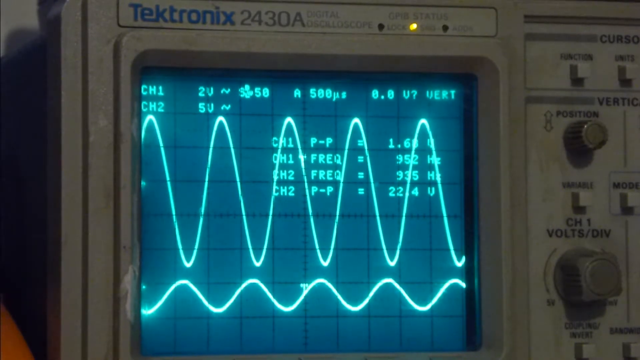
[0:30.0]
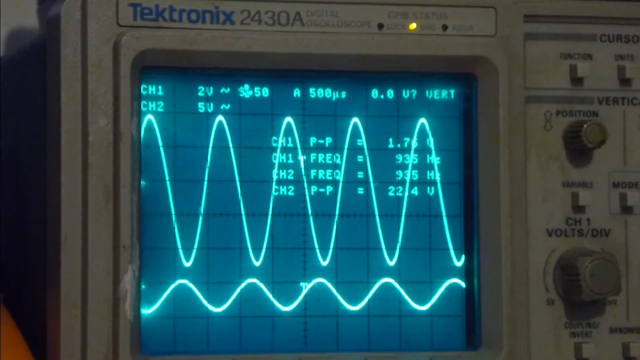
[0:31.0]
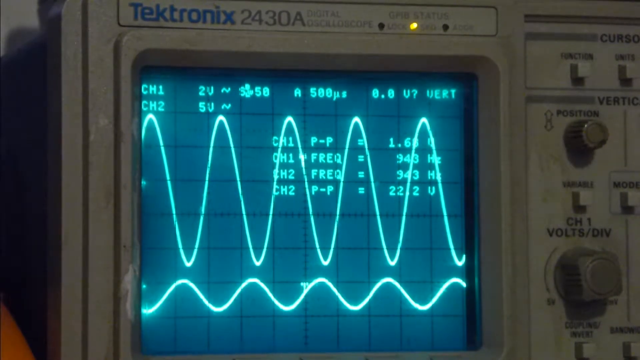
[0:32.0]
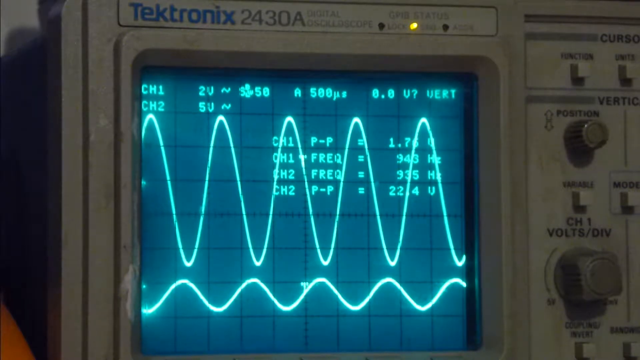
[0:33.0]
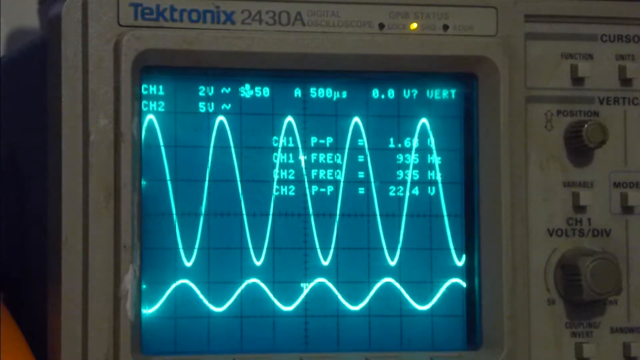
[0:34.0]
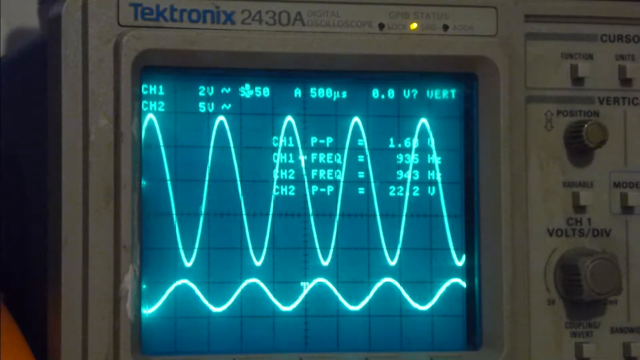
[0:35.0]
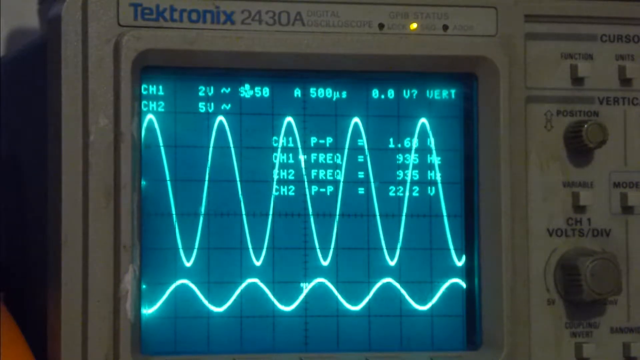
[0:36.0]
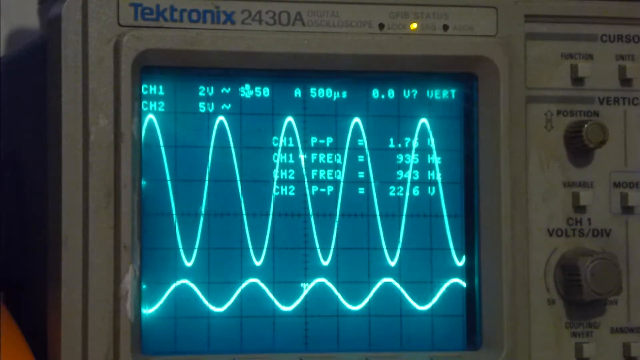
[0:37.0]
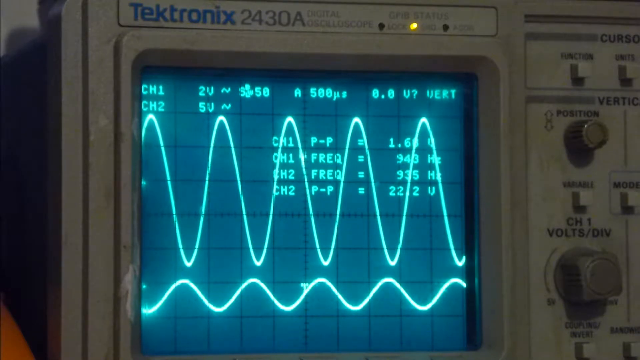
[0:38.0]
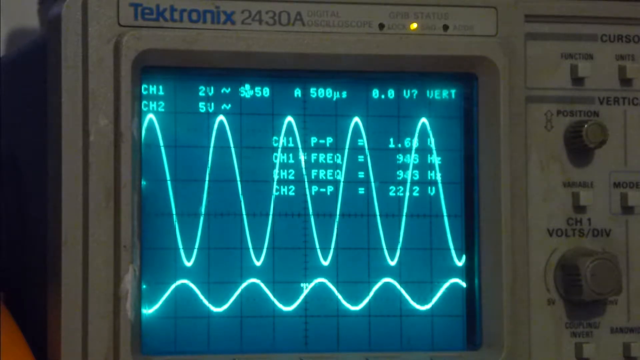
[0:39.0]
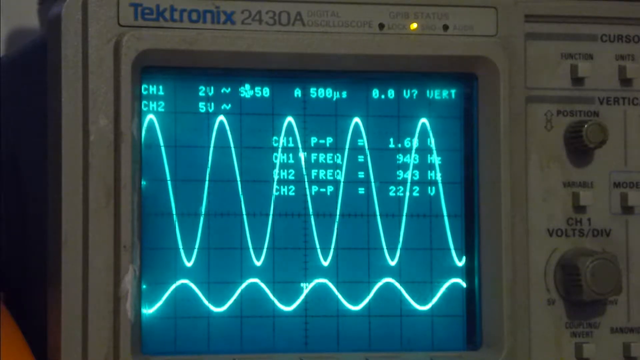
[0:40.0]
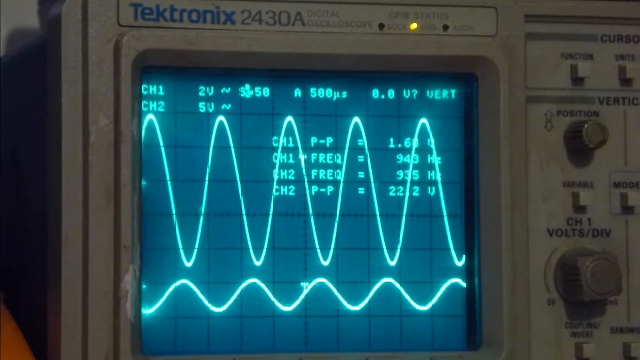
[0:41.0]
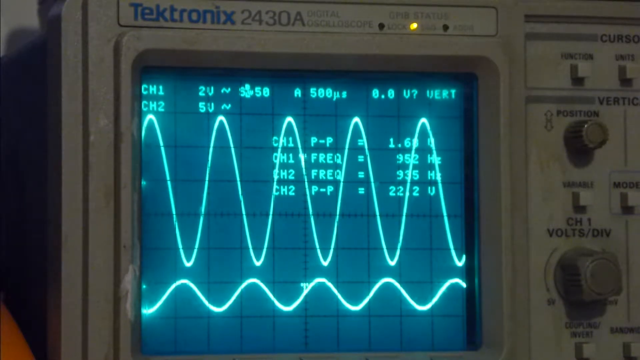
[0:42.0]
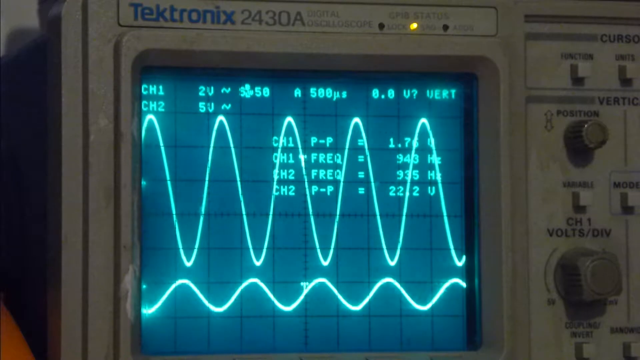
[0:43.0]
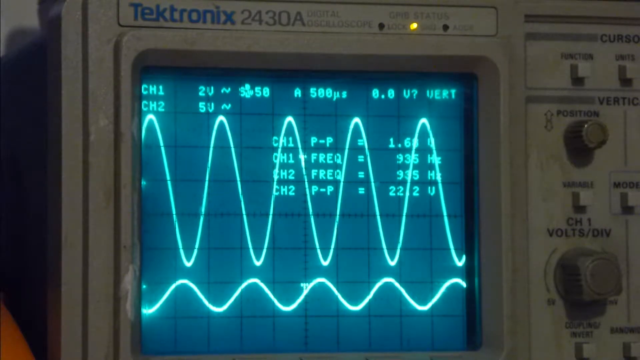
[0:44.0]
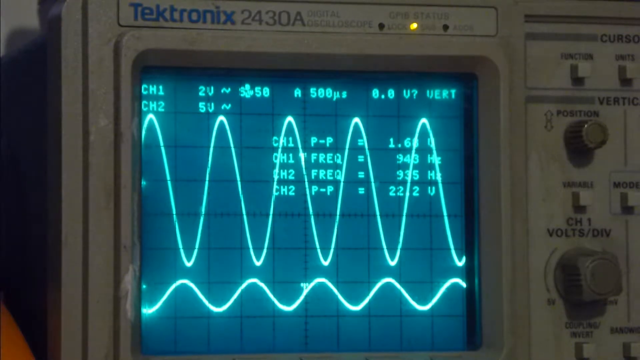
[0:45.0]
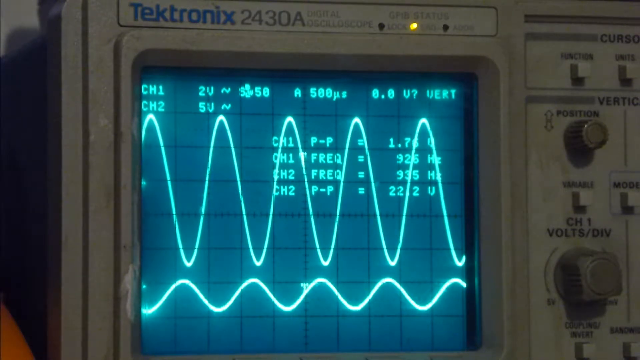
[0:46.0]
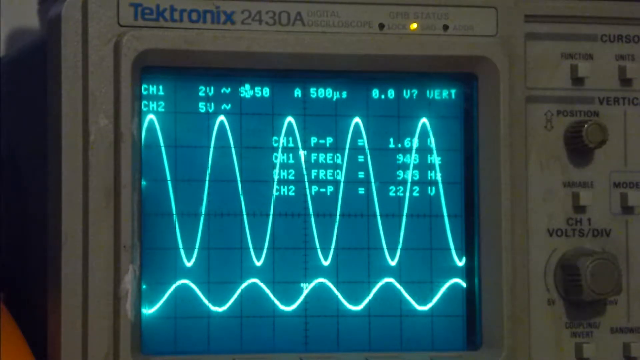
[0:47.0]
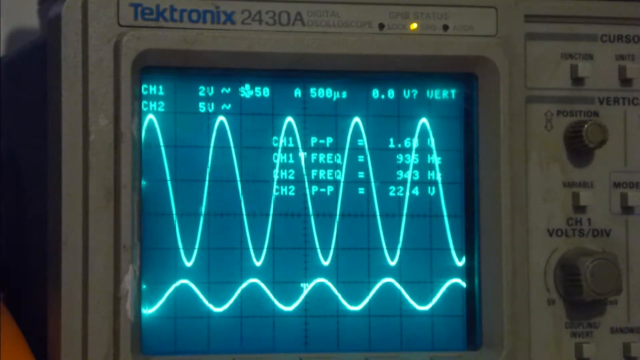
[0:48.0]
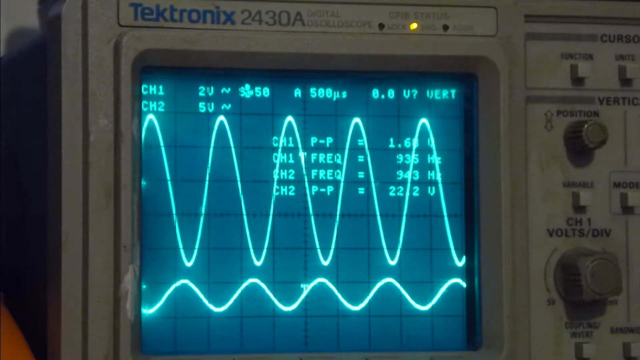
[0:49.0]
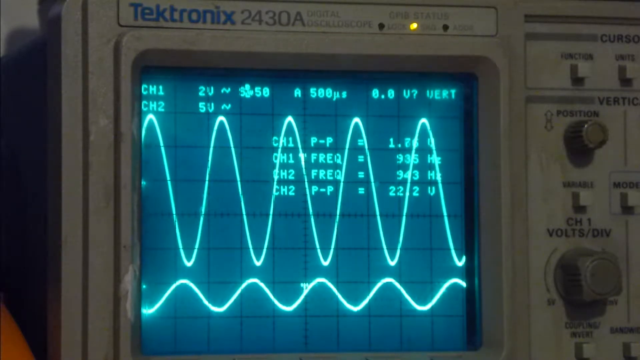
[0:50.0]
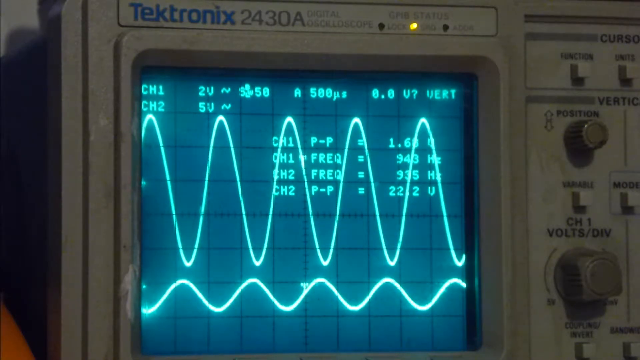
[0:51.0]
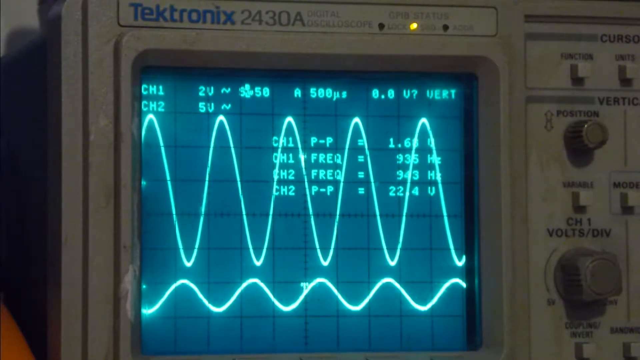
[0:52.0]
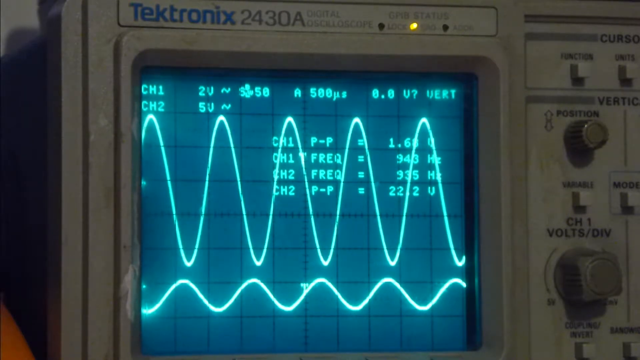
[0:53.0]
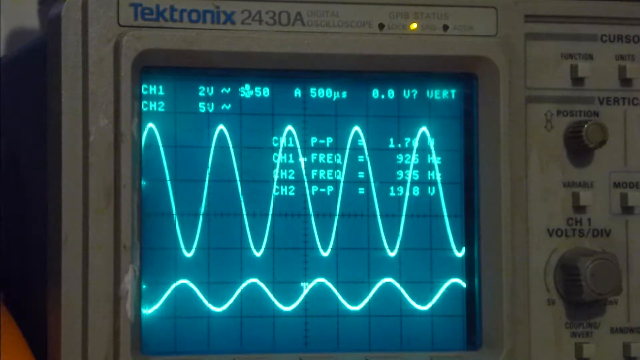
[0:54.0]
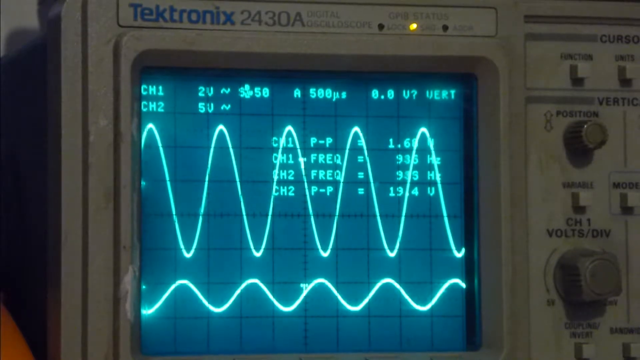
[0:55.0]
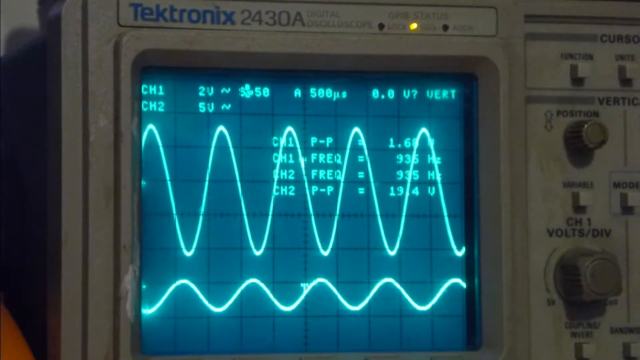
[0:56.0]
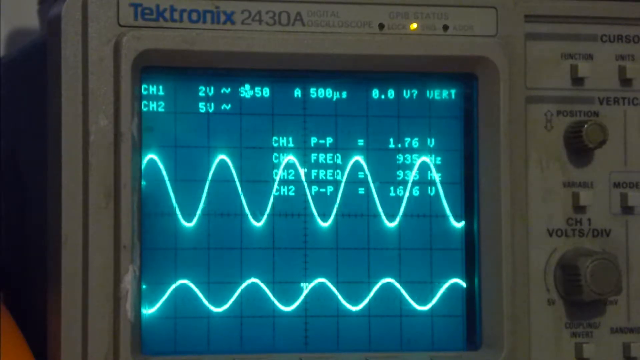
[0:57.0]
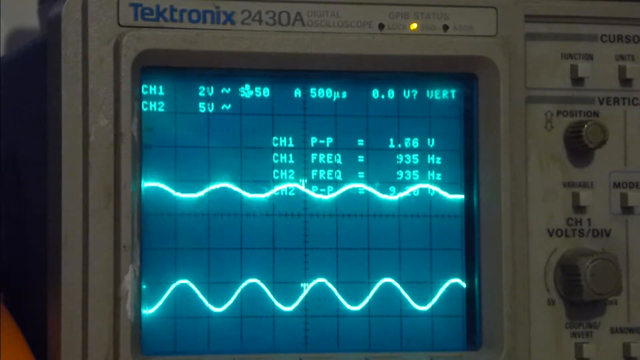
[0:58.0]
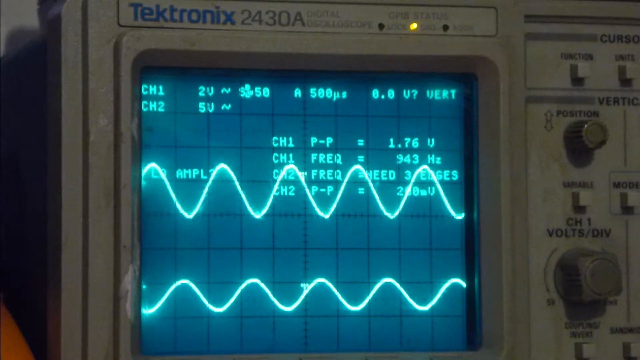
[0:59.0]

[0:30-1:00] The oscilloscope has not moved much, and no settings are visibly adjusted, yet the amplitude on the screen changes. The high-amplitude wave at the top, apparently the first channel, gets smaller until it looks like just a horizontal line; this happens quickly, within a few seconds, and it is unclear how it is being changed. Meanwhile, the p-p and frequency values in the middle of the screen slowly change.